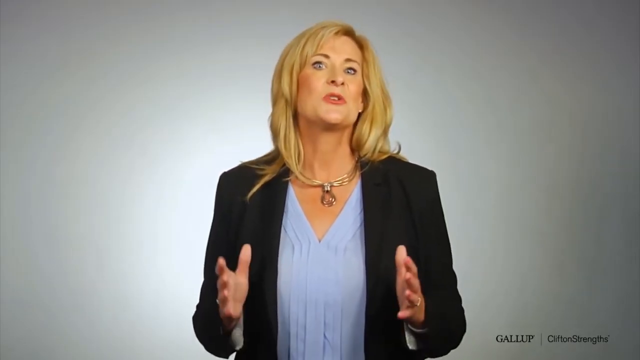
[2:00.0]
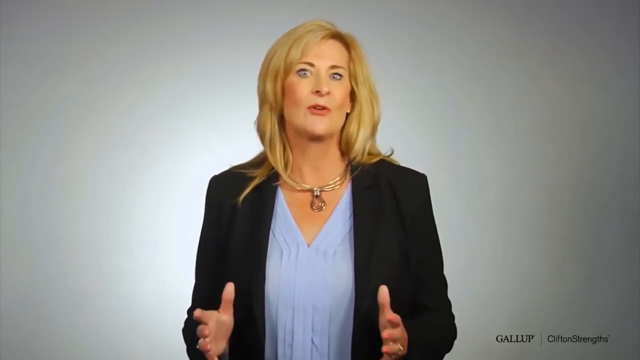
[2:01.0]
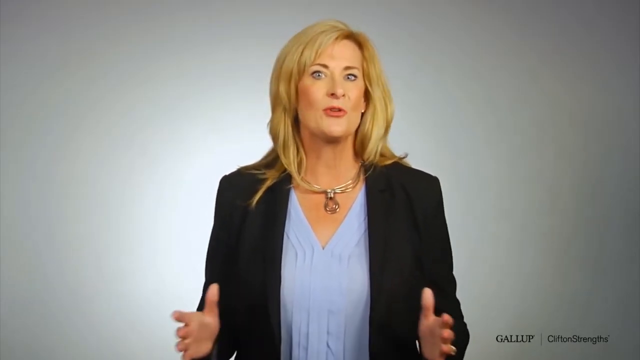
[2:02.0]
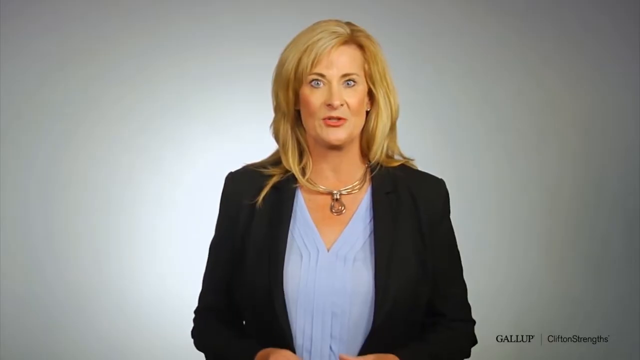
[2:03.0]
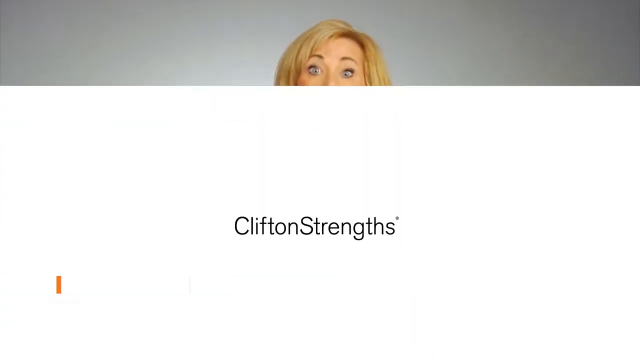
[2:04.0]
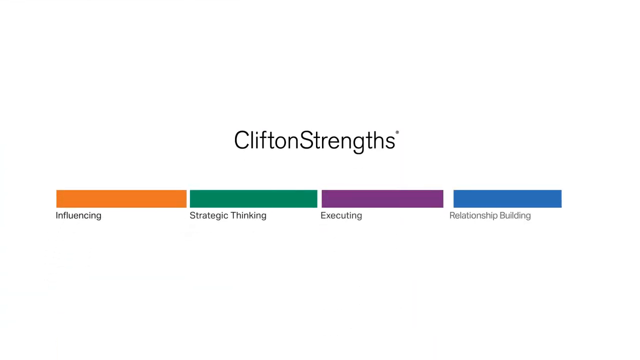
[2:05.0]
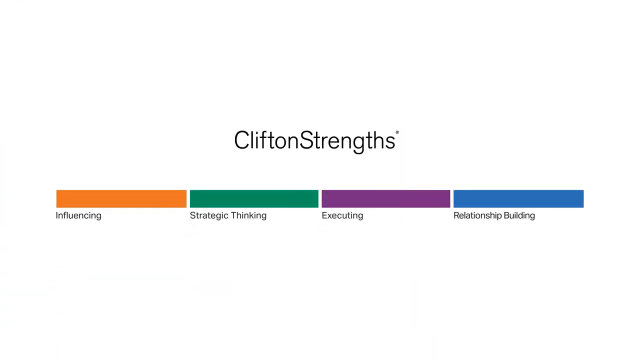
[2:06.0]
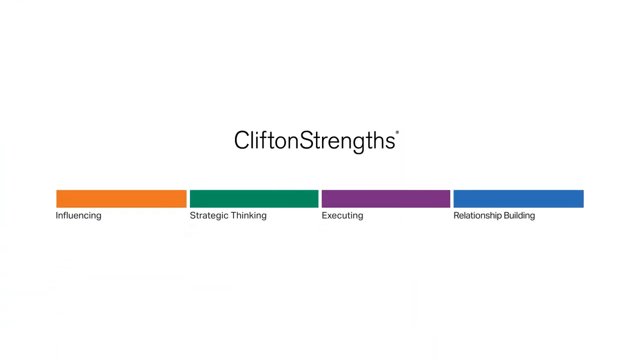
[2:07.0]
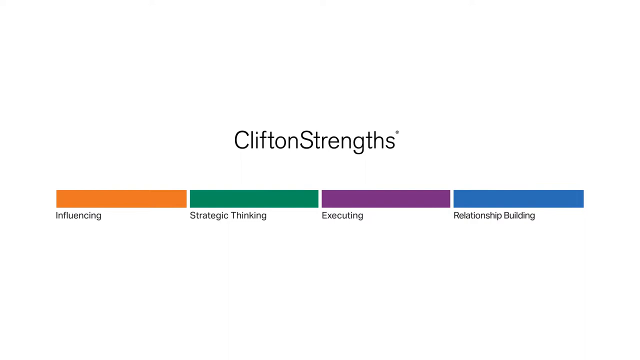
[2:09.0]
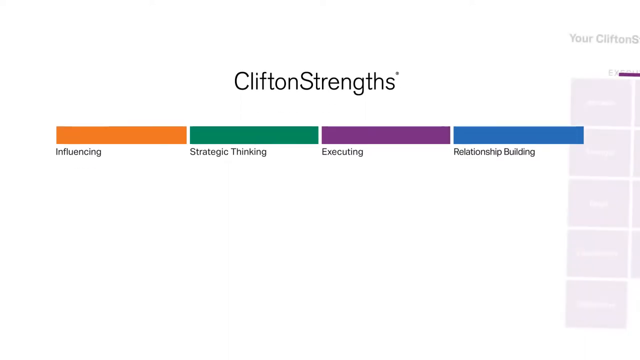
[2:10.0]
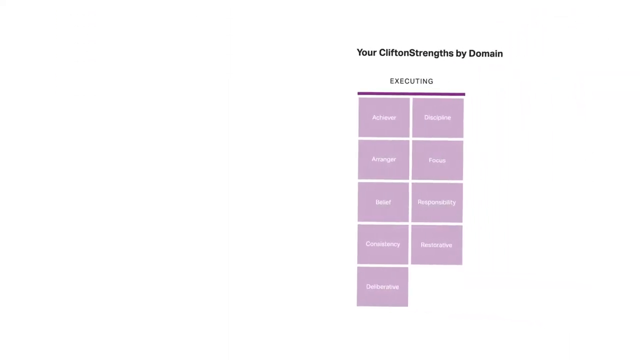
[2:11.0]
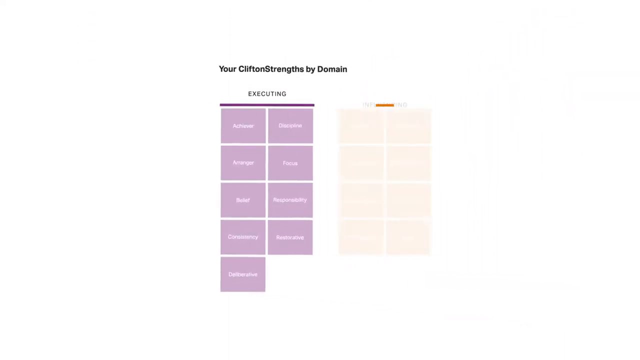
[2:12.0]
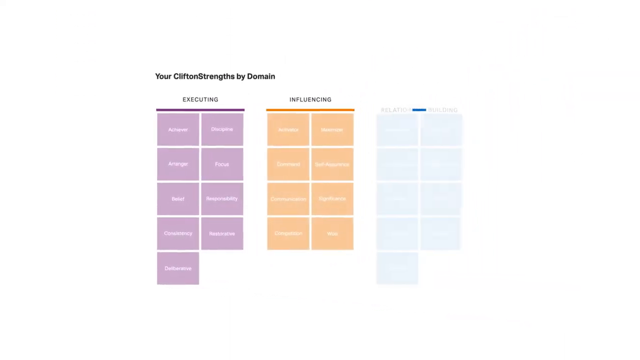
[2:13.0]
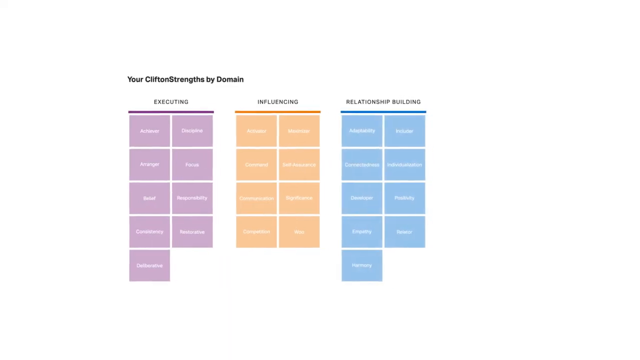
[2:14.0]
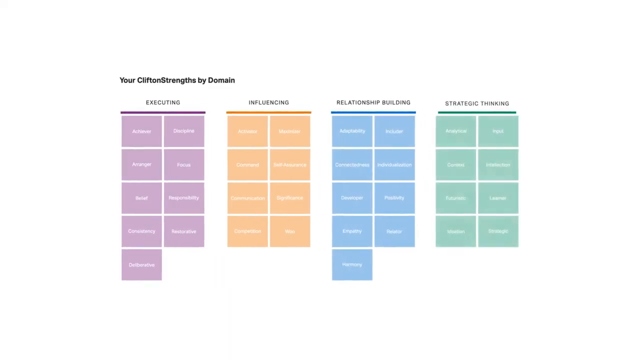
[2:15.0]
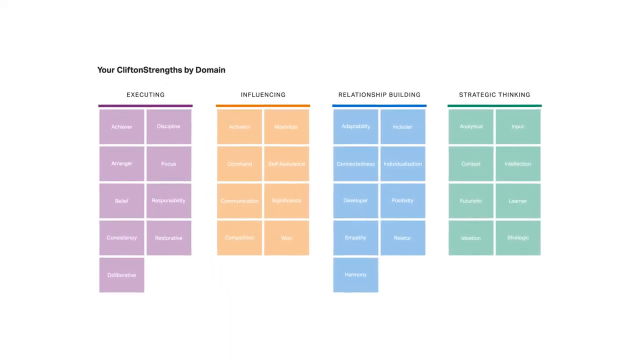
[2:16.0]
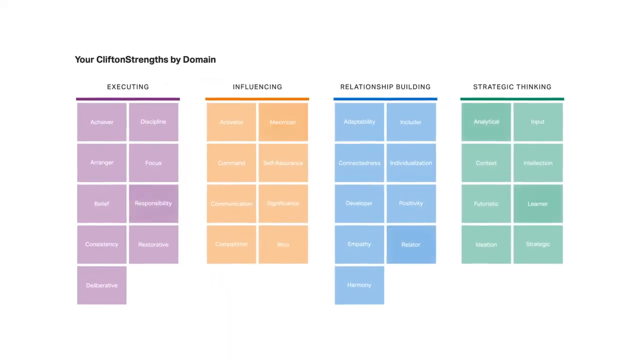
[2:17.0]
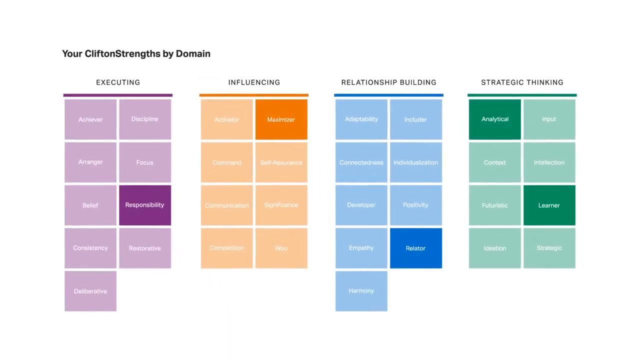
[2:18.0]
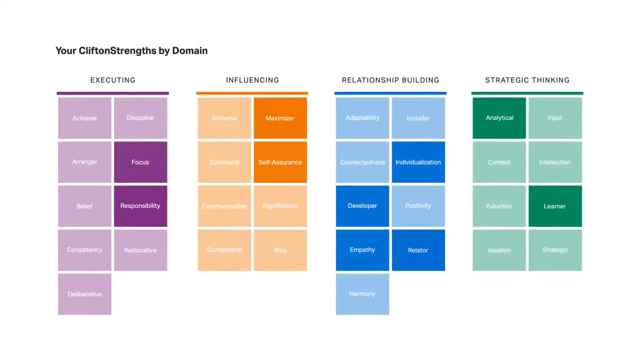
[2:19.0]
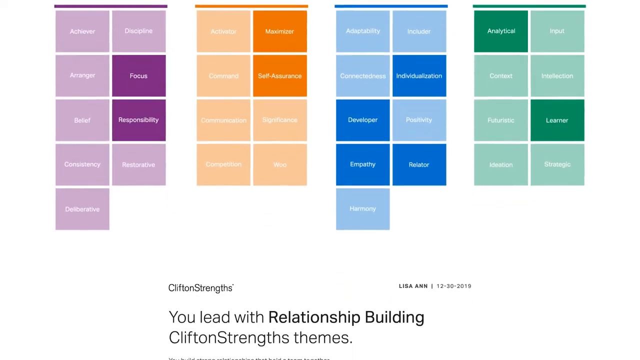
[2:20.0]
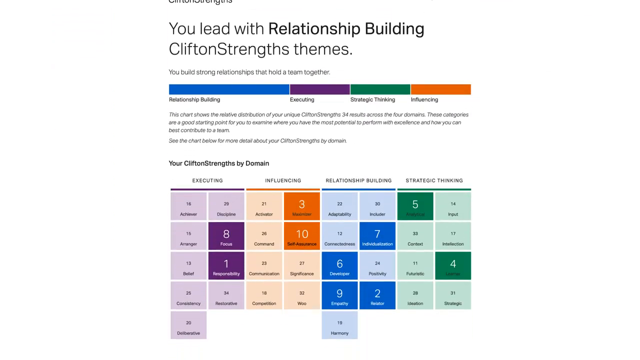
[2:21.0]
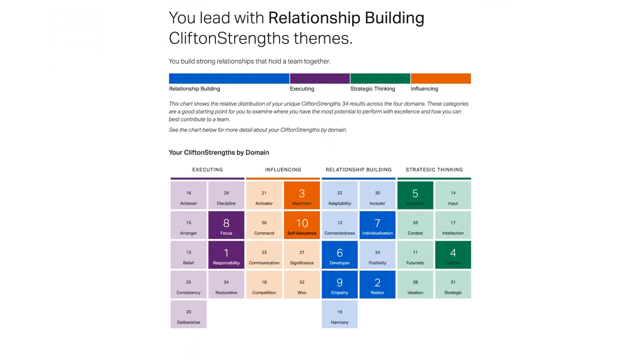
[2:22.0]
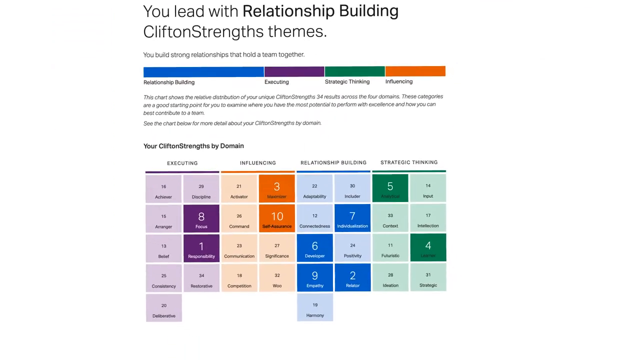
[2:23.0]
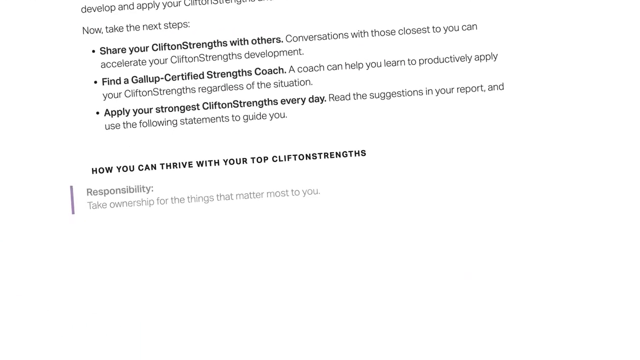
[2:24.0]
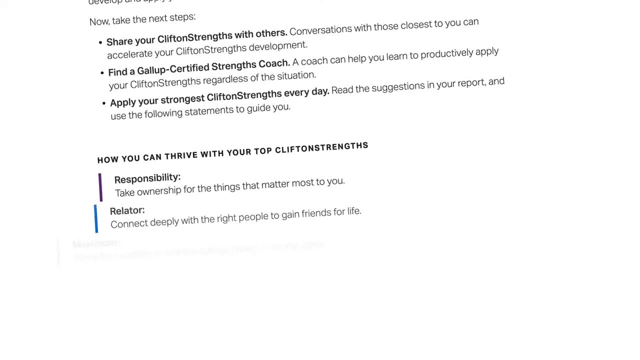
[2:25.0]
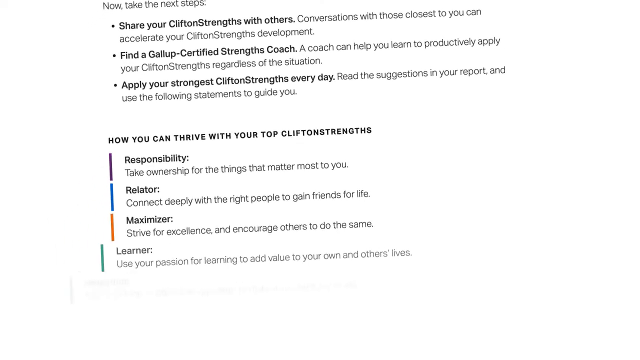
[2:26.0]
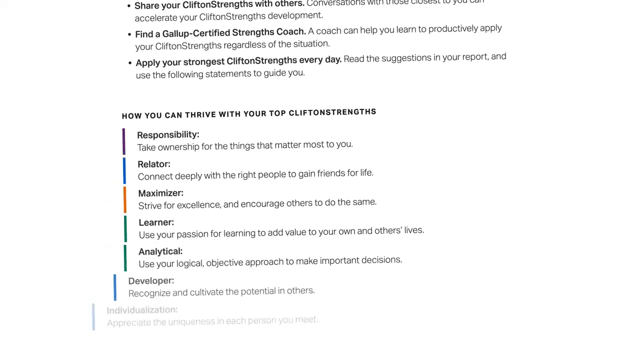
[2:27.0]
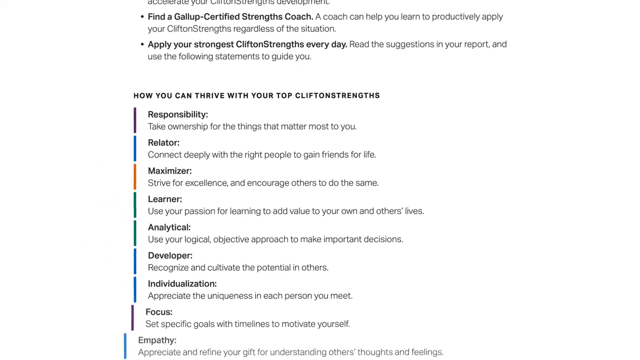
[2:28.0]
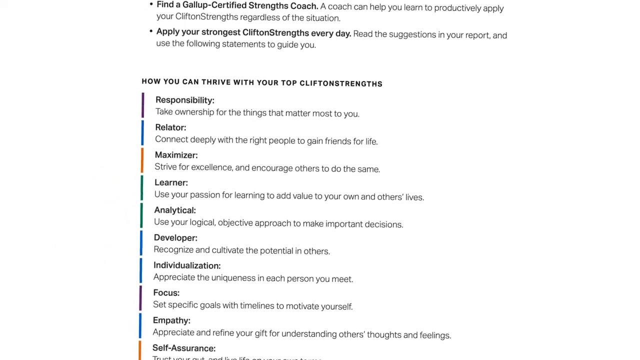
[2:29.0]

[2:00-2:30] The woman is still talking at first. Then CliftonStrengths is shown again with the same four categories: influencing, strategic thinking, executing and relationship building. Another chart comes across the screen, apparently showing how the skills are broken up into these four blocks. Executing has achiever, discipline, arranger, focus, belief, responsibility, consistency, restorative and deliberative. Influencing has activator, maximizer, command, self-assurance, communication, significance, competition and woo. Relationship building has adaptability, includer, connectedness, individualization, positivity, developer, empathy and harmony. Strategic thinking has analytical, input, context, intellection, futuristic, learner, ideation and strategic. The view focuses in on these, and it looks like it will show a person's top 10 strengths out of these to build a profile.